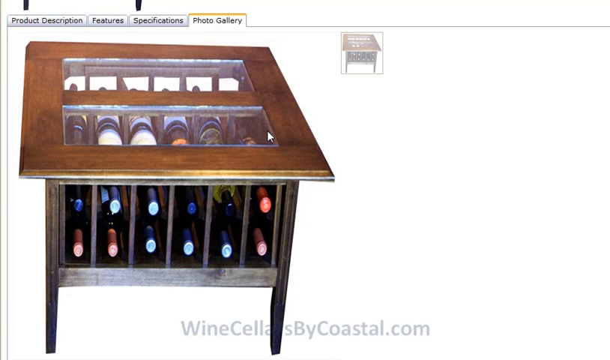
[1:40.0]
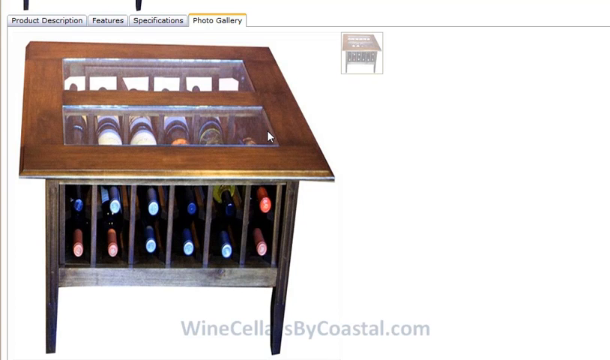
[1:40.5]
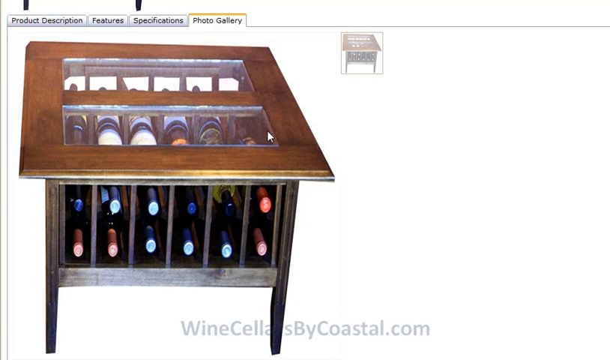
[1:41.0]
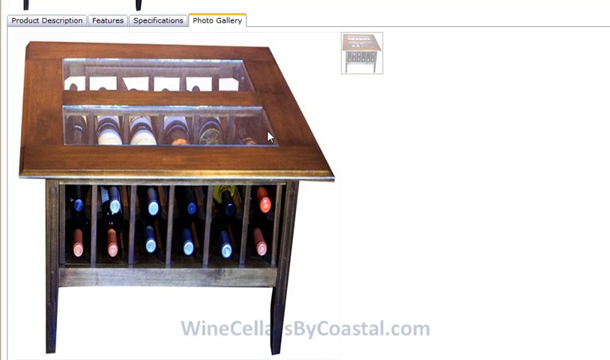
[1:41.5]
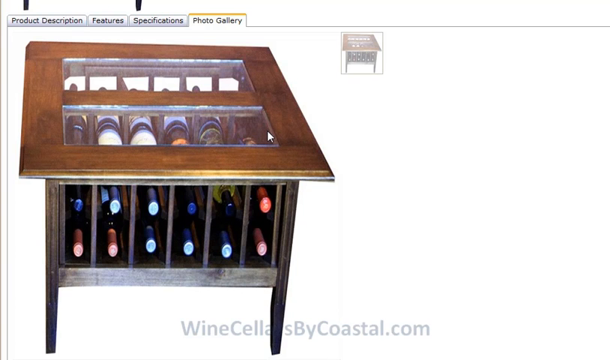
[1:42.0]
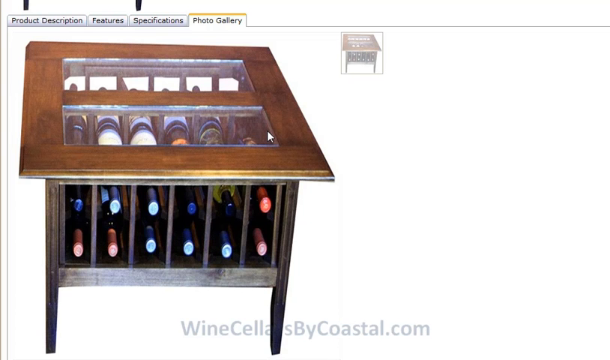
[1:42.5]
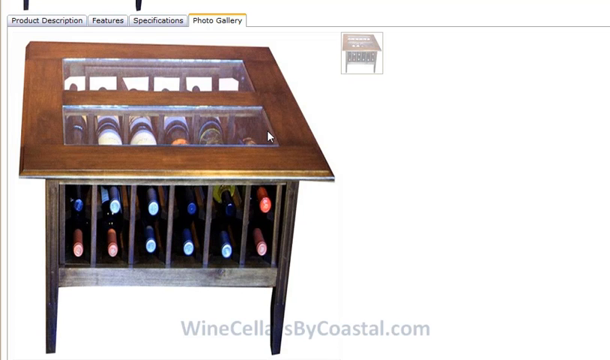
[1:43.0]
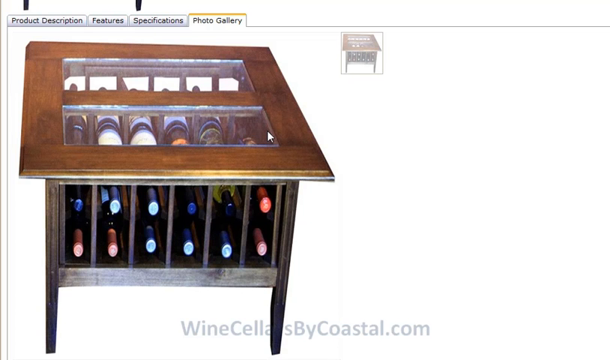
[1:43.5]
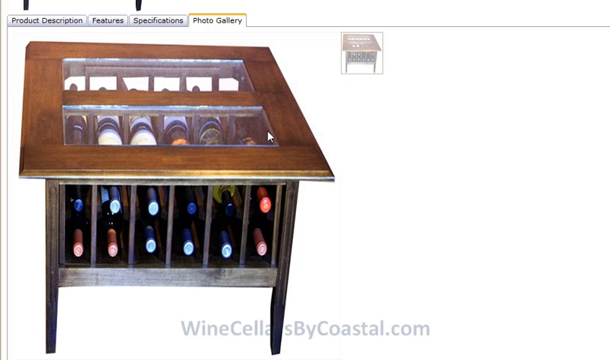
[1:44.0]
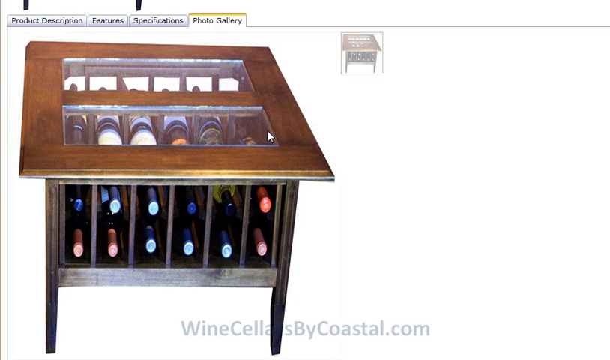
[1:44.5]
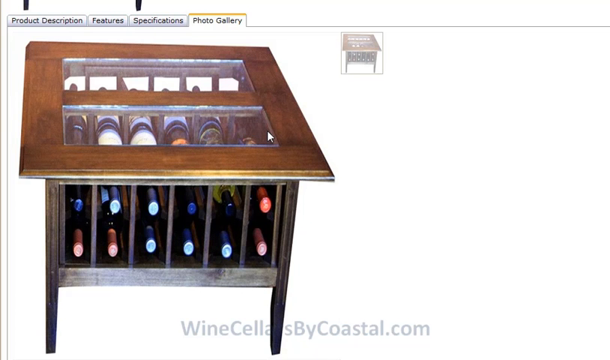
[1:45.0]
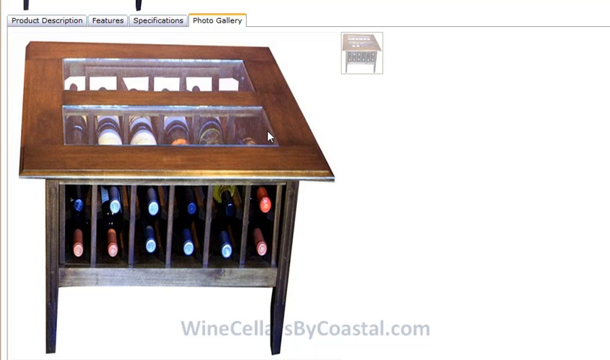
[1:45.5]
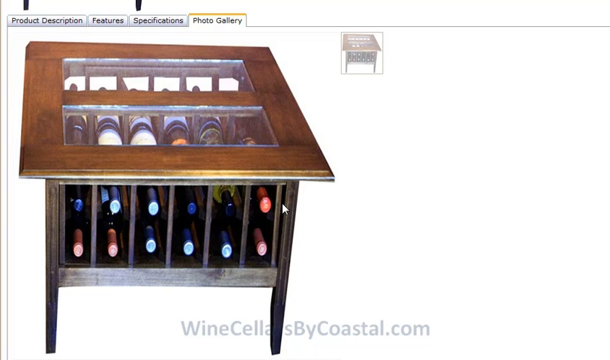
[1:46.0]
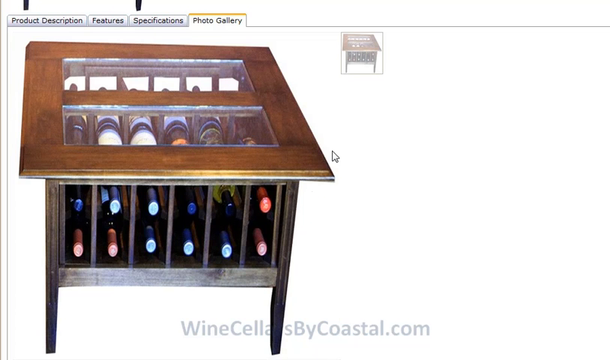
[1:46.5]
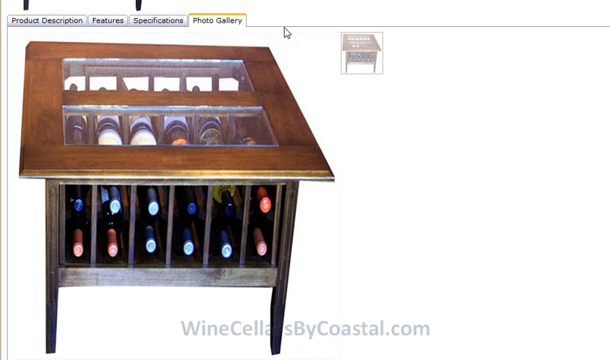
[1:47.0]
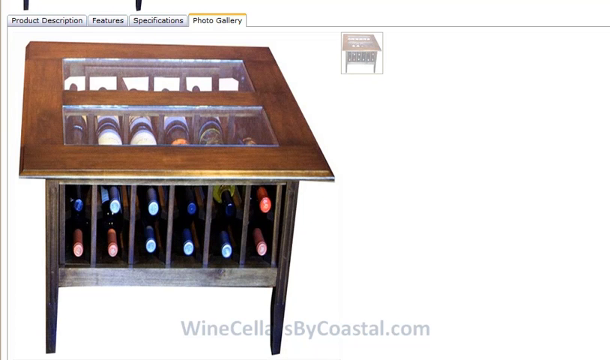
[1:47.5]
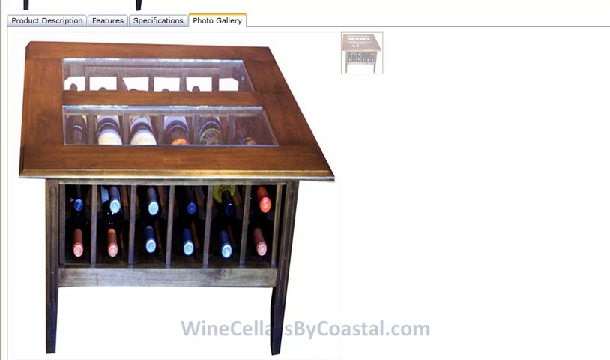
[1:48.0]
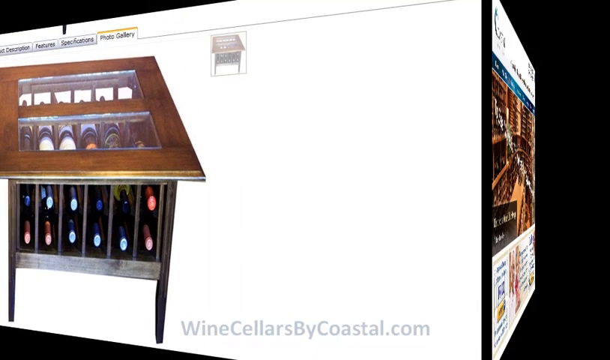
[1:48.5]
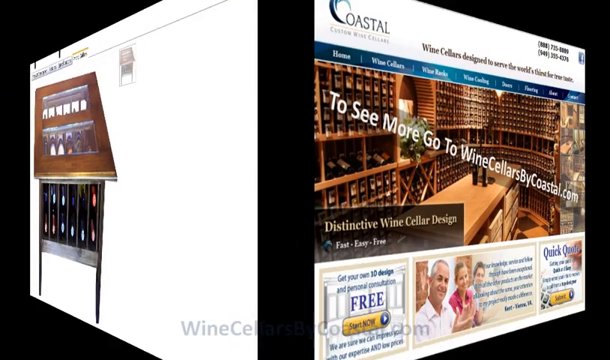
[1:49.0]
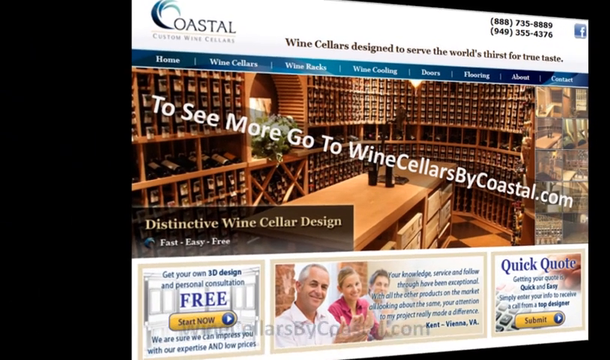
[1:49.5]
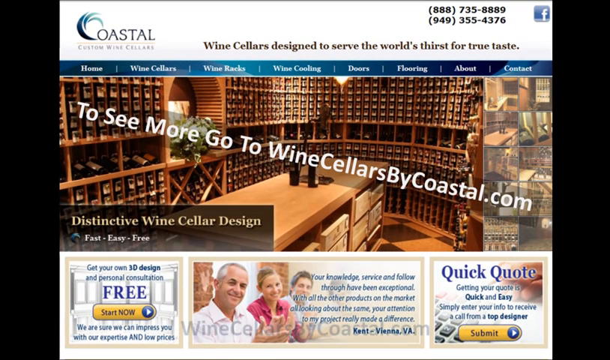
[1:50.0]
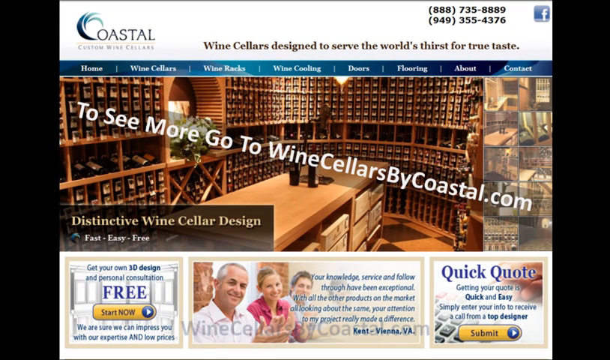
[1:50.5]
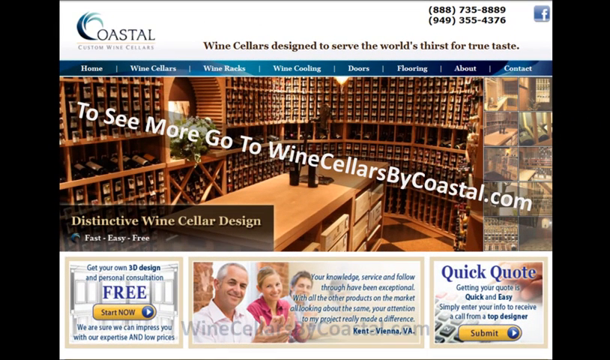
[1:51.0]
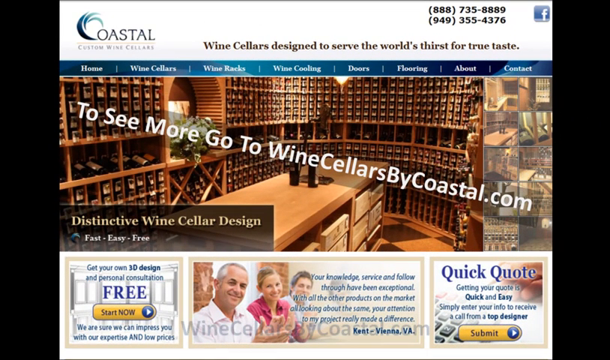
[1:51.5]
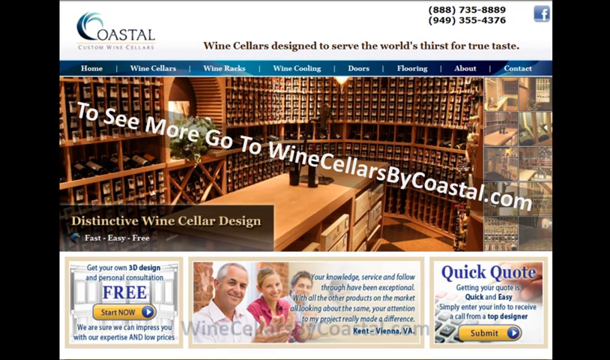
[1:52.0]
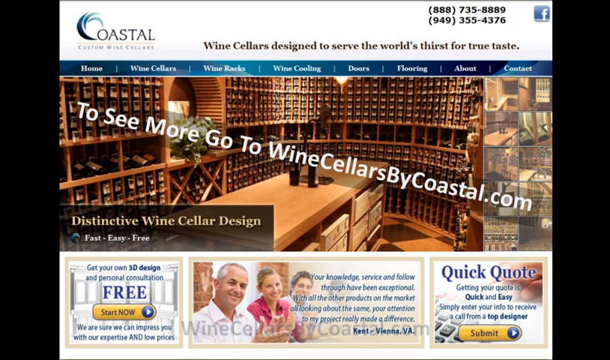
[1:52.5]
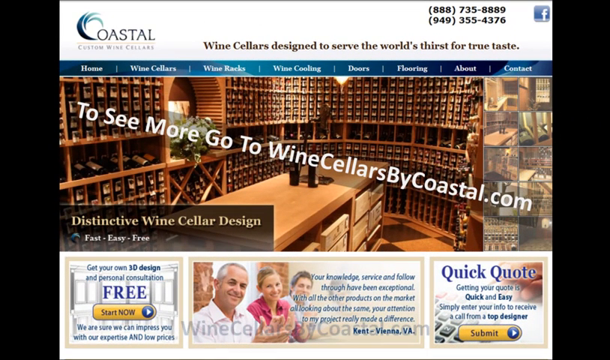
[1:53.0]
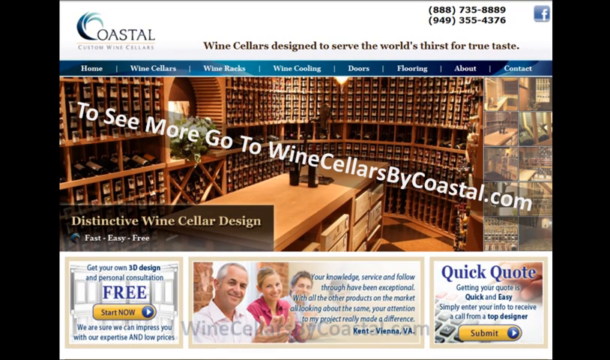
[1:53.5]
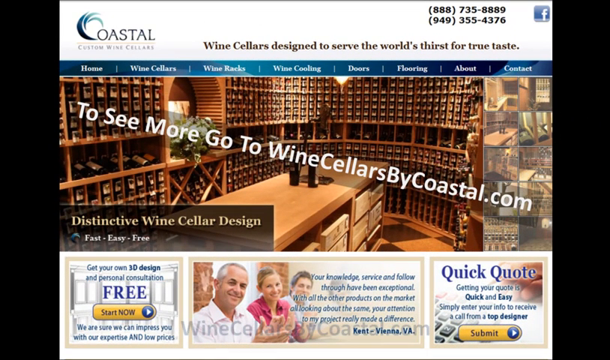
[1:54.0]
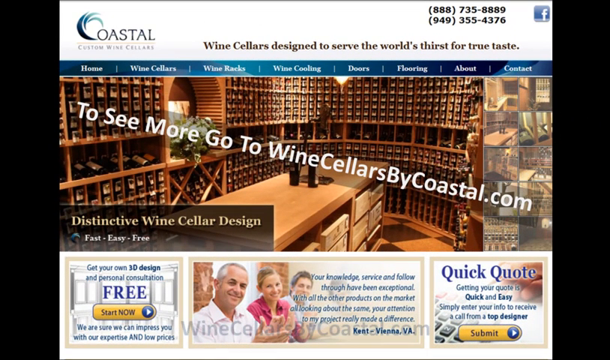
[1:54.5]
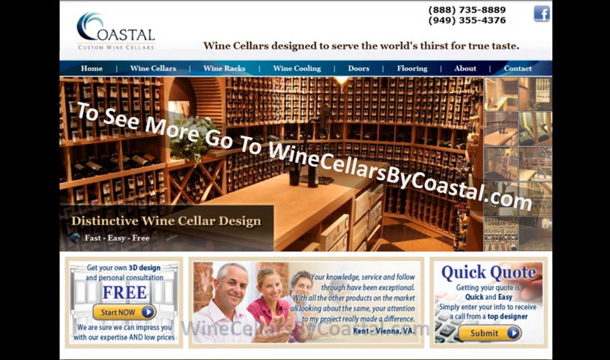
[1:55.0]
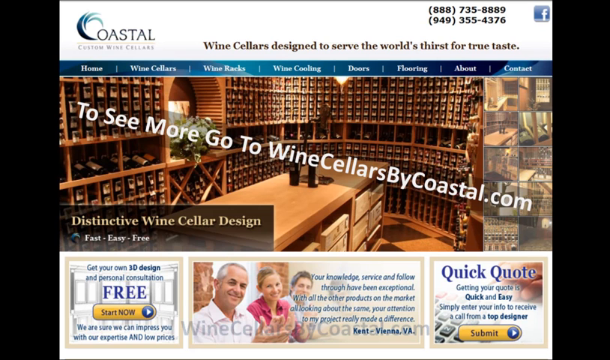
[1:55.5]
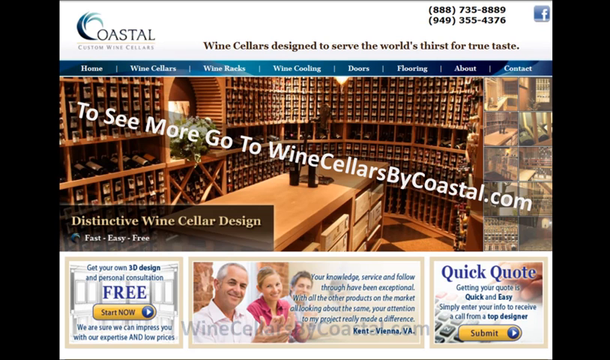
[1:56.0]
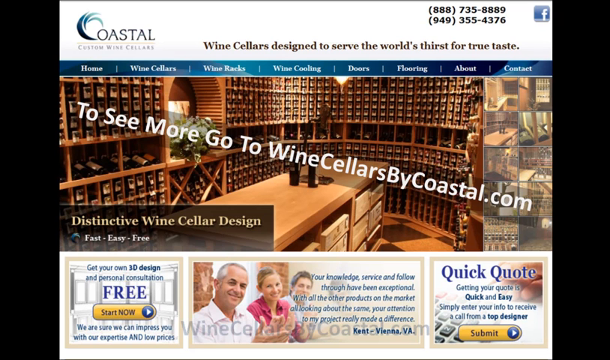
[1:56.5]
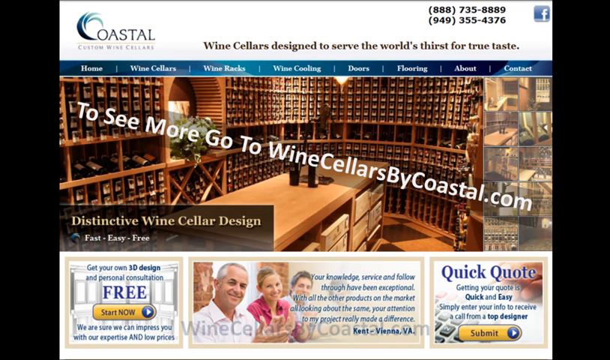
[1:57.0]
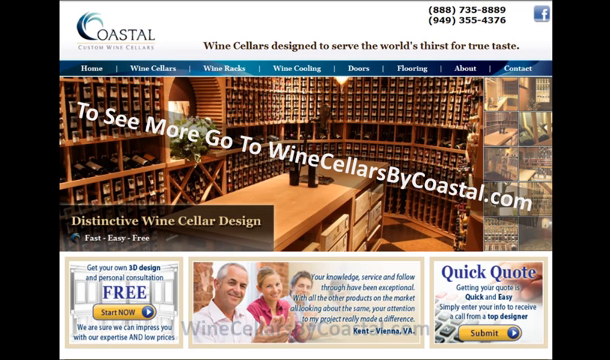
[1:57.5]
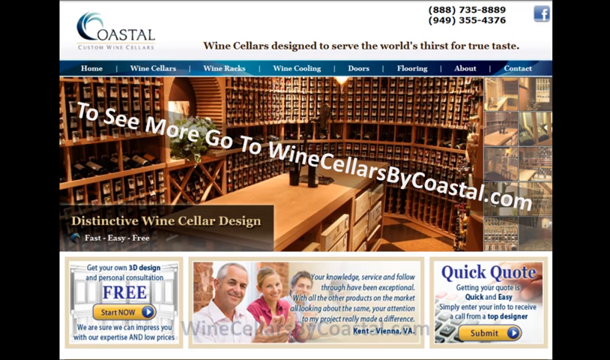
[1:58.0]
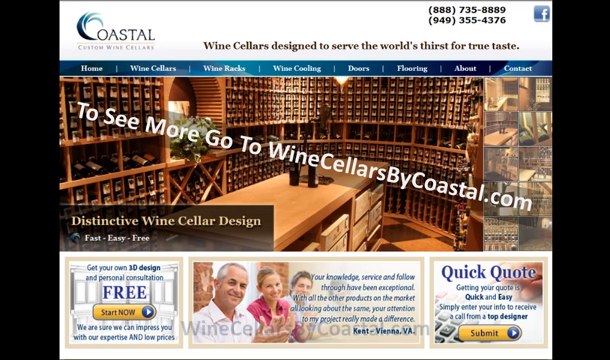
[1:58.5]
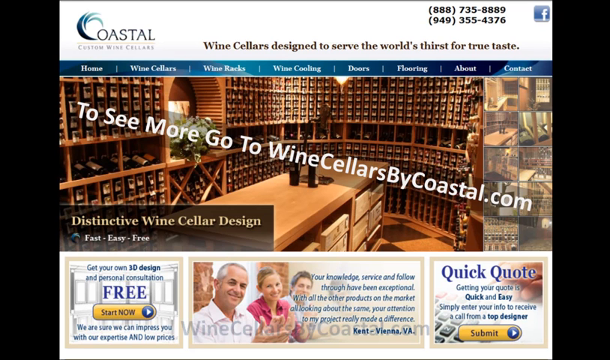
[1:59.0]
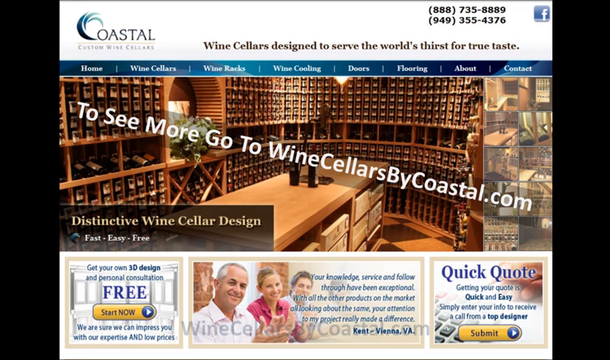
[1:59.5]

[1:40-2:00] A web page is open on the photo gallery tab for a product, with a white background and, toward the left side, a large image of a small coffee table. It is brown wood and rectangular, with two cutout panels on top covered in glass, and underneath is a wine rack with six columns and two rows holding wine bottles, 12 bottles total. To the top right of this image is a smaller, kind of faded-out thumbnail of the same image. At the bottom of the screen is the web address winecellarsbycoastal.com. The screen then changes to a website for Coastal Custom Wine Cellars. Its featured photo shows what looks to be a large wine cellar with walls of small shelves and compartments full of wine bottles. White text across the screen reads "To see more, go to winecellarsbycoastal.com". Toward the bottom of the page are a few square images, one reading "Quick quote, getting your quote is quick and easy" and another reading "get your own 3D design and personal consultation", with call to action buttons such as "start now" and "submit". There is also an image at the bottom of two men and one woman smiling, with a short testimonial written inside it. At the top right of the screen are the company's phone numbers and a Facebook icon, and a tagline in the white header block reads "Wine cellars designed to serve the world's thirst for true taste".